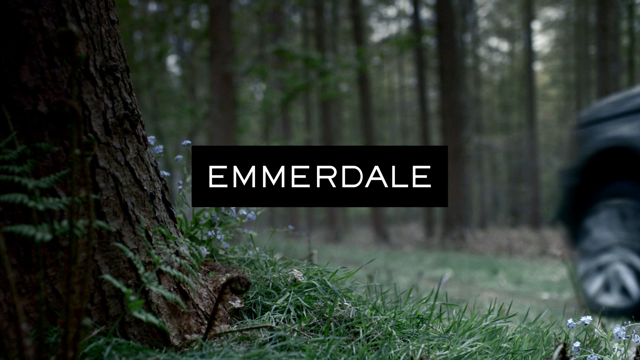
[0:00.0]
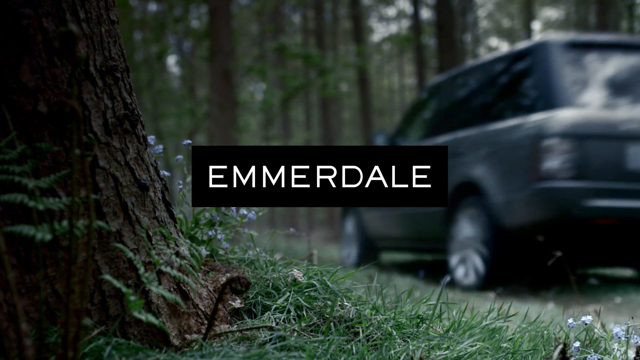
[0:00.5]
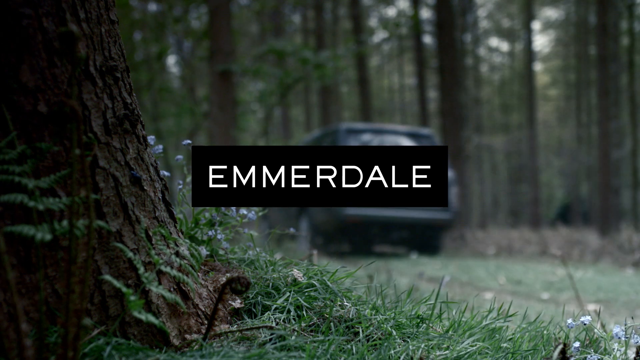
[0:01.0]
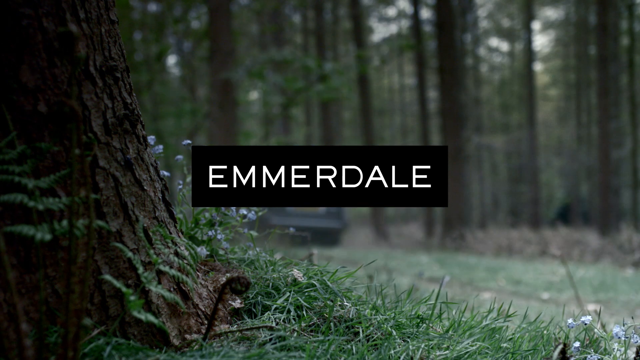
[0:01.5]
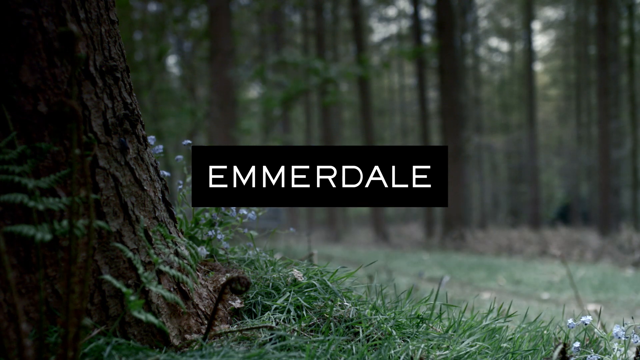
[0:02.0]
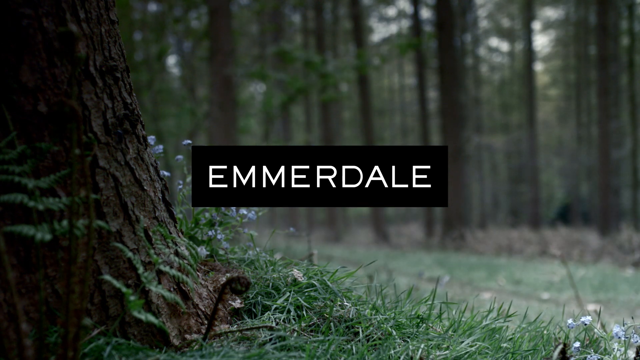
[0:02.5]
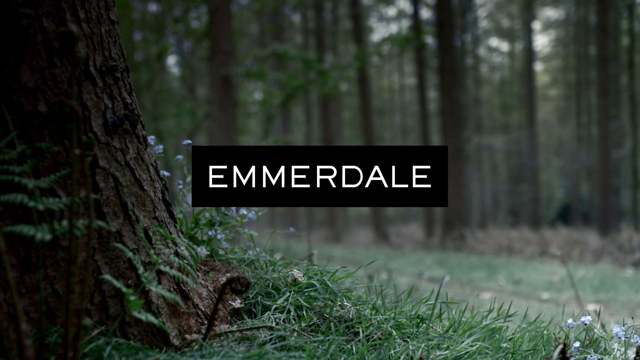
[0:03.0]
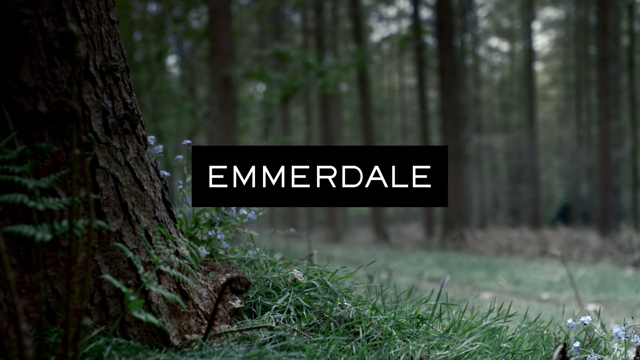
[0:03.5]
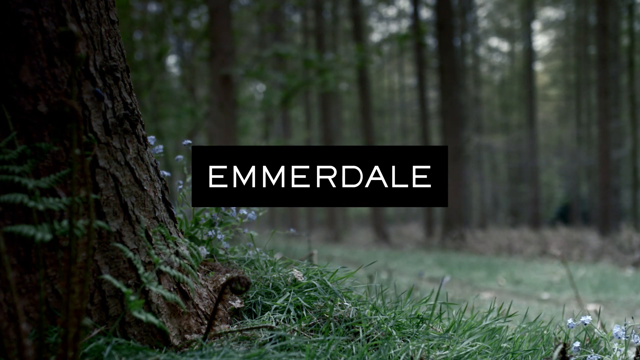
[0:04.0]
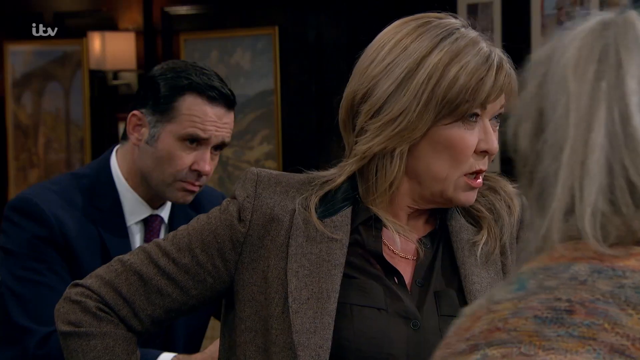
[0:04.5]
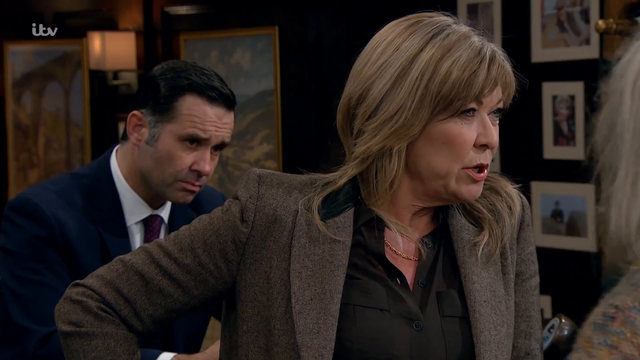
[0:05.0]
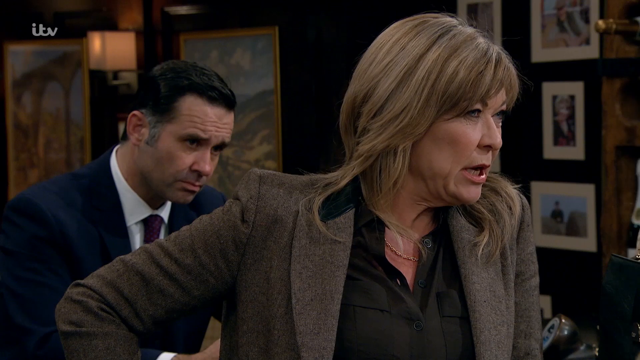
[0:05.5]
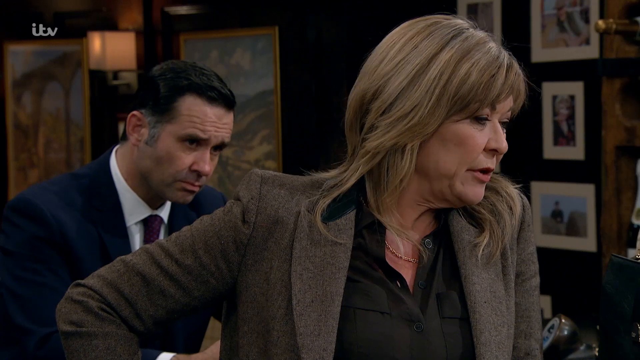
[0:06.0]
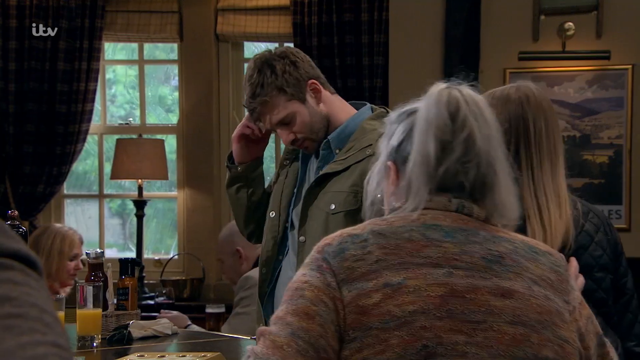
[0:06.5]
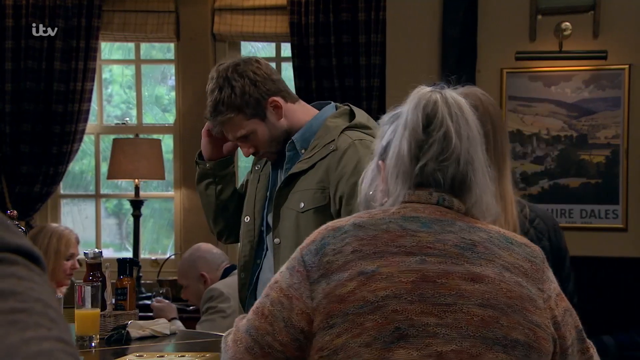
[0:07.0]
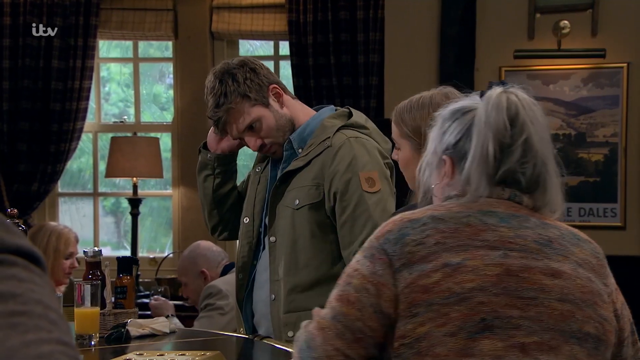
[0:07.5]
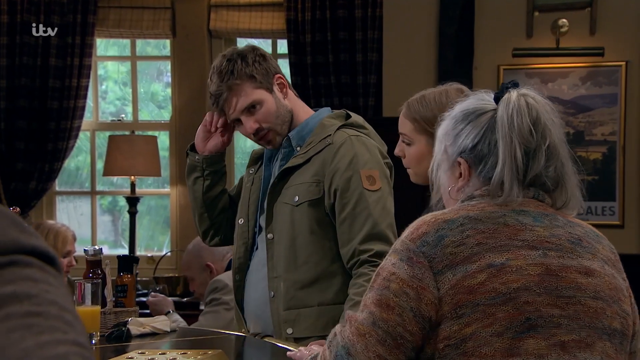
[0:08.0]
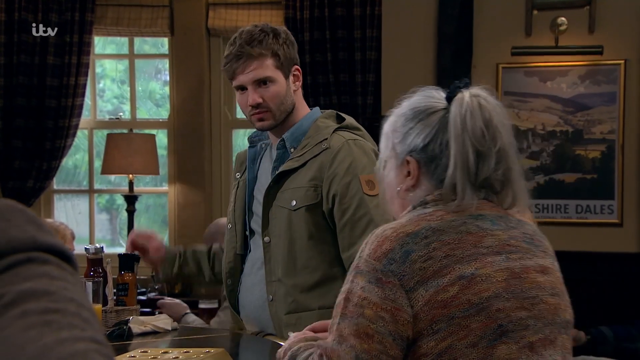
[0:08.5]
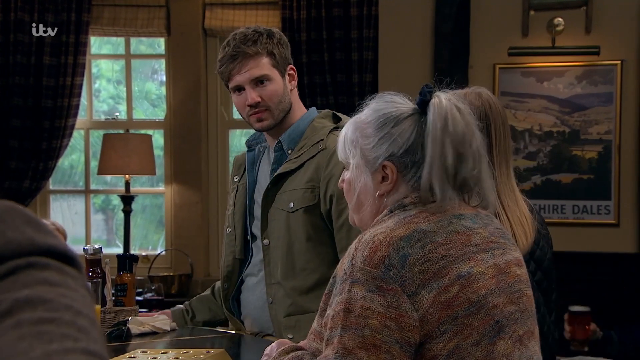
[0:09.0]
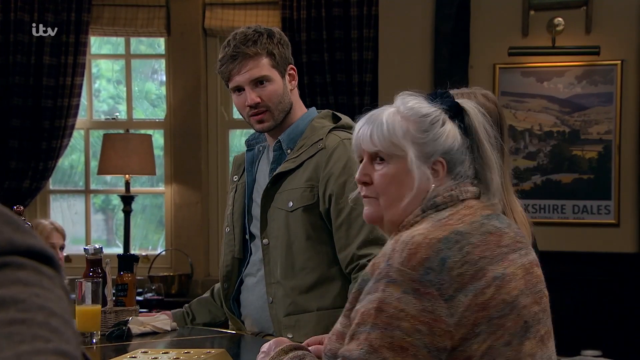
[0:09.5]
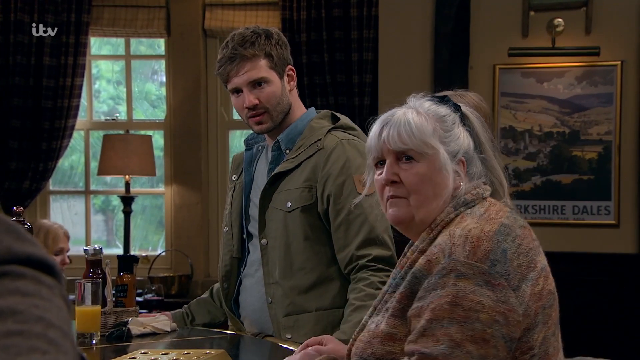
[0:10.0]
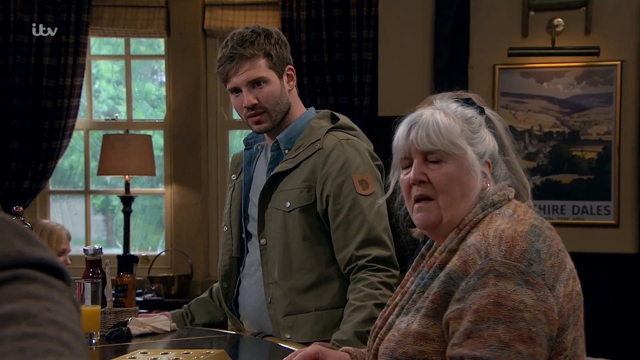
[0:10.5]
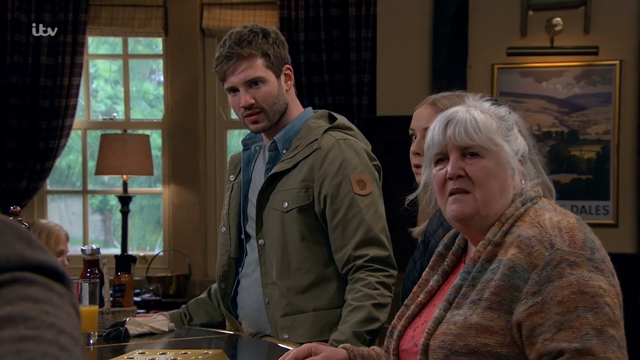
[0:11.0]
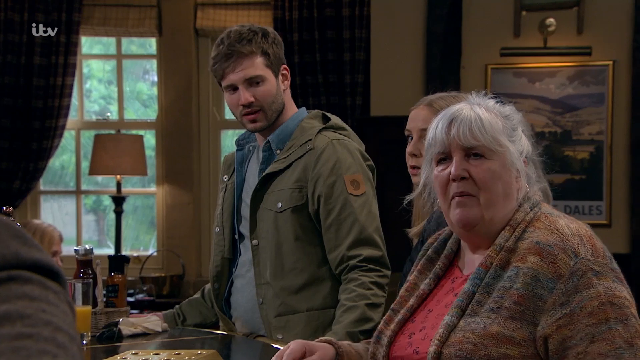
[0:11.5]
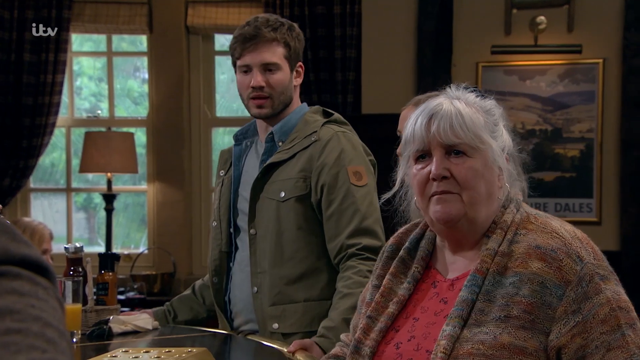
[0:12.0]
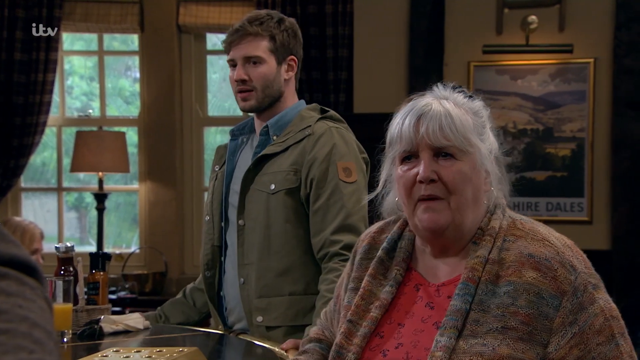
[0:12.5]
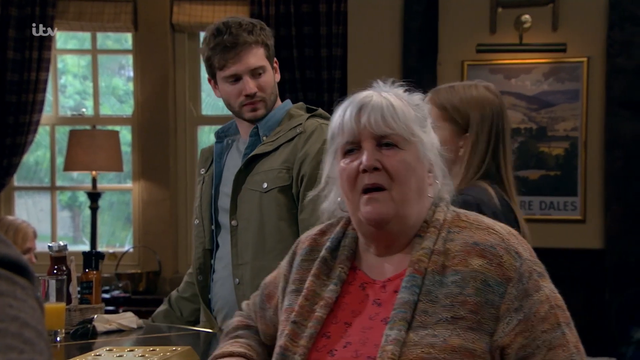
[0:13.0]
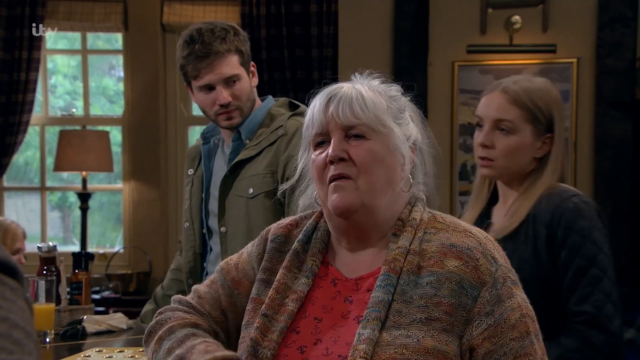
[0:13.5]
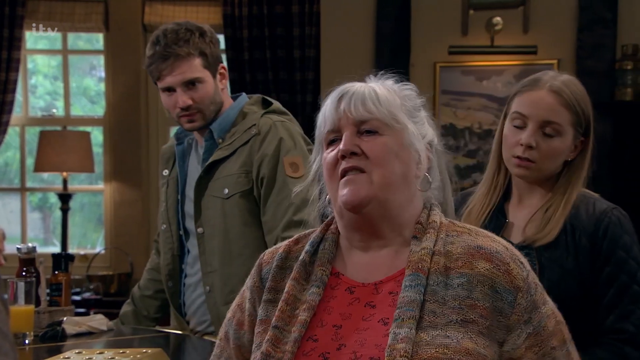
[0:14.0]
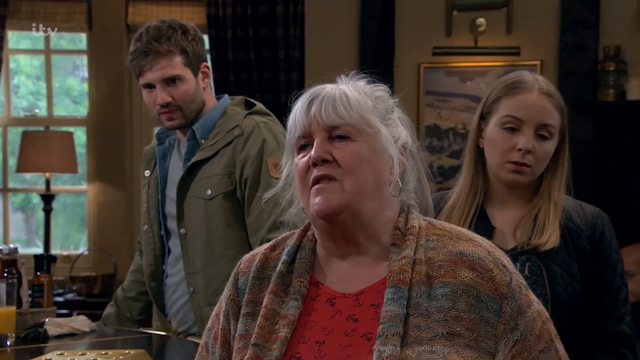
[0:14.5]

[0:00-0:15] The word "Emmerdale" appears on screen. There is an image of a car driving through the woods, and the opening shots show the back of what appears to be a Range Rover. The scene moves inside a bar with four people: an older lady, a younger girl, and a man wearing a jacket. This seems to be the start of a soap opera or something similar. There is also a man in a suit and another woman, and the older lady is talking to someone. The video cycles through these shots. There are pictures on the wall and a lamp, and the interior seems to have a cozy atmosphere.